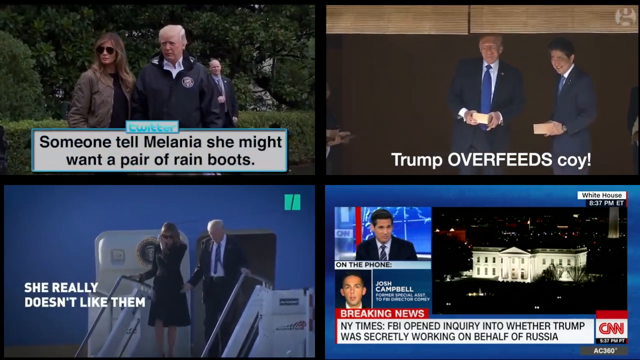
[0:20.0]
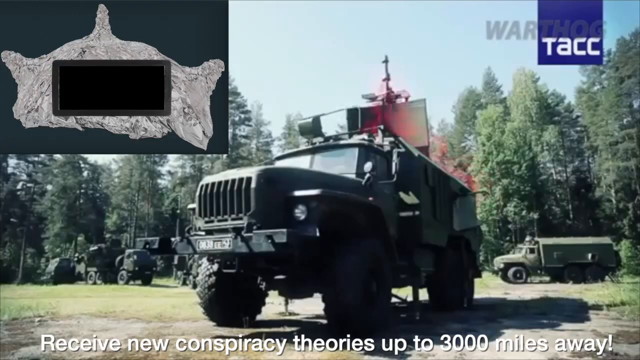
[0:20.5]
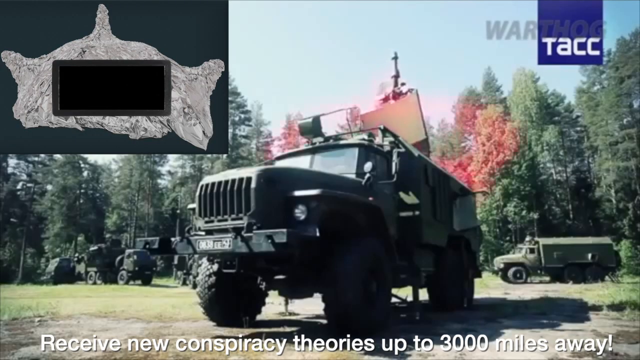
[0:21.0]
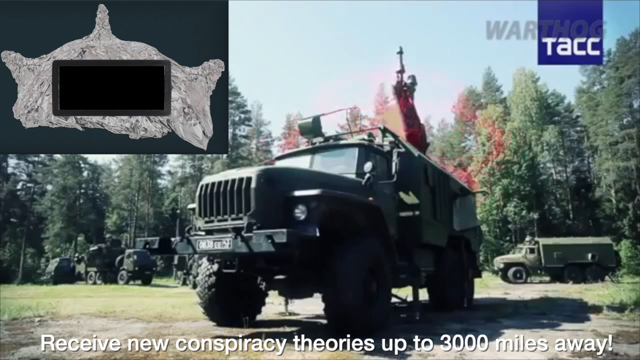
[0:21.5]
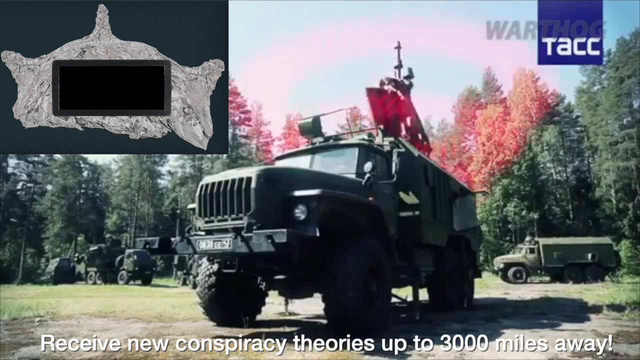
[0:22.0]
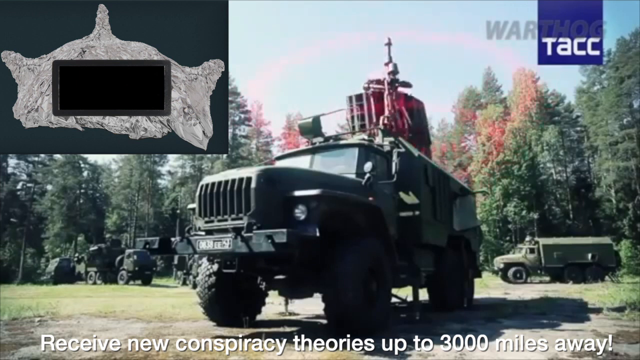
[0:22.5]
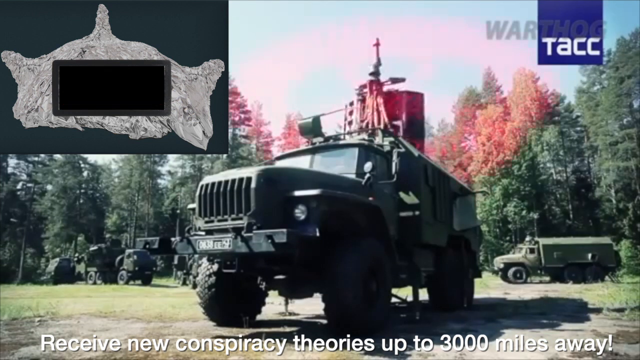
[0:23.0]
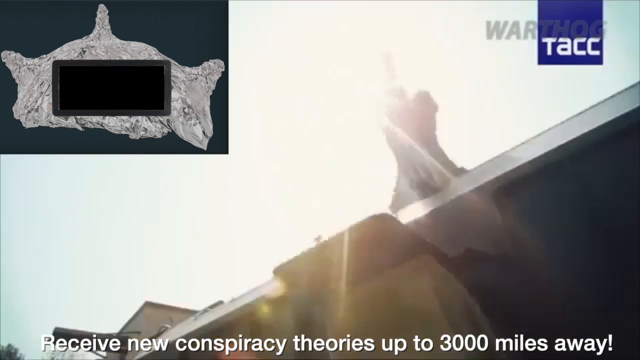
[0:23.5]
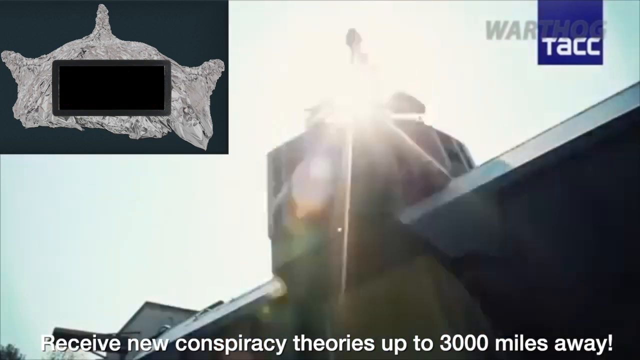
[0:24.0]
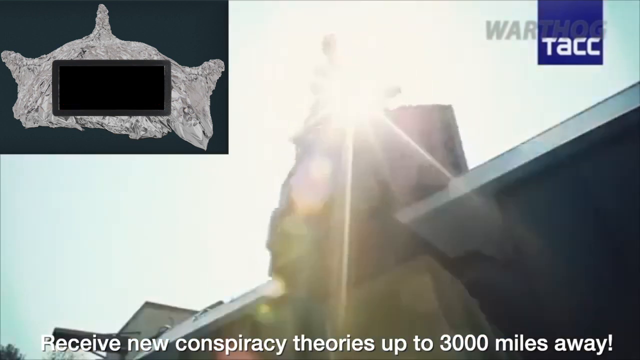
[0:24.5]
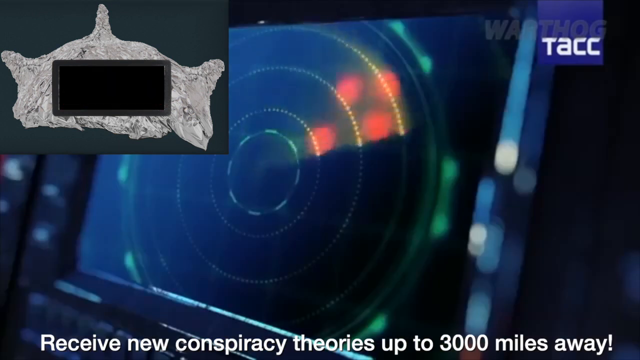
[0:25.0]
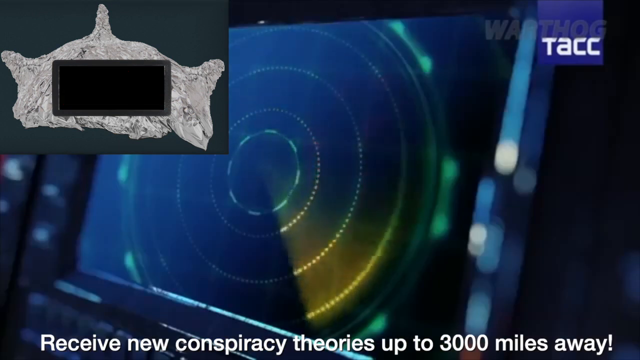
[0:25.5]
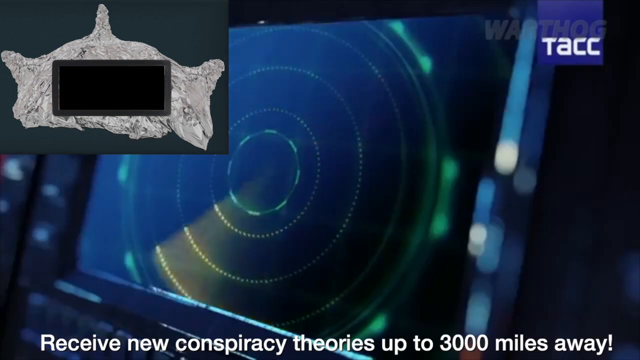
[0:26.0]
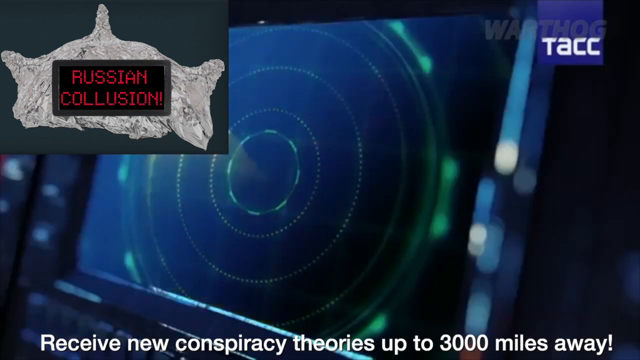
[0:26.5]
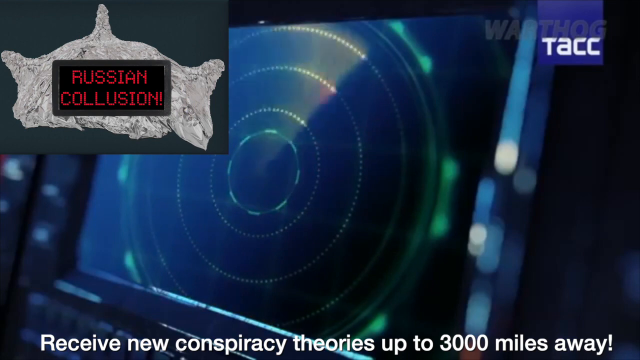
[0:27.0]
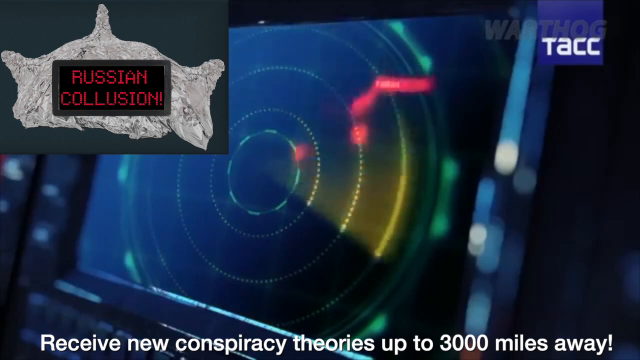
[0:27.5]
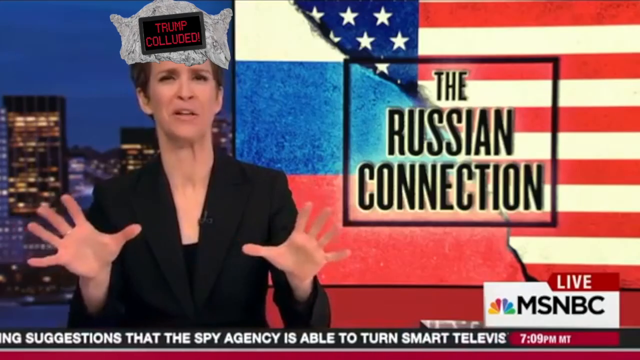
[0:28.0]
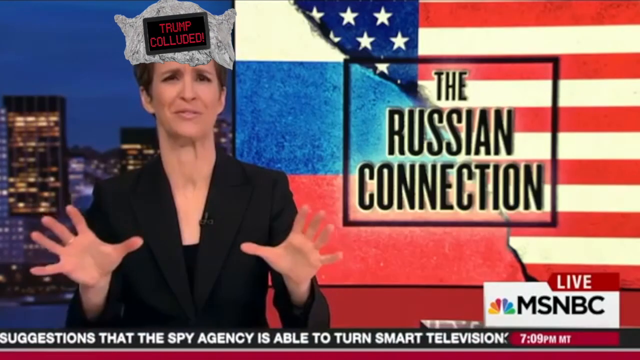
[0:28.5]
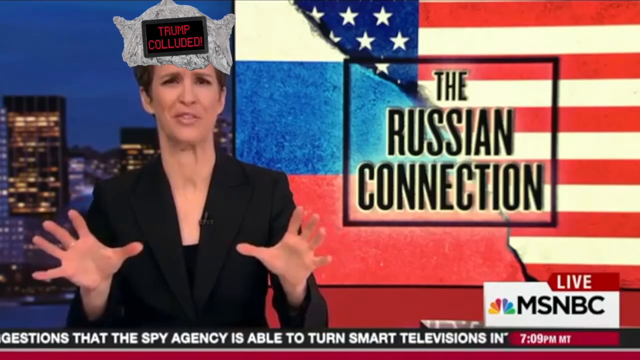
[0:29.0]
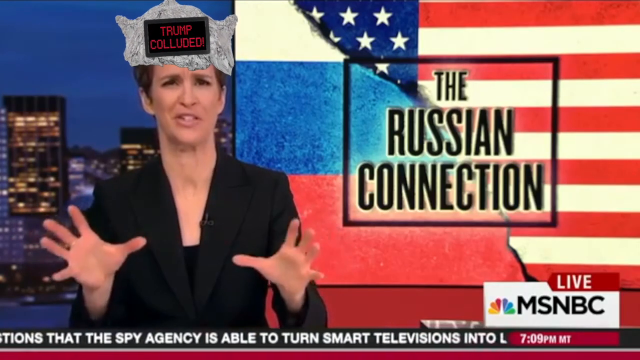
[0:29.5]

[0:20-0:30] Four videos appear on screen. The upper left shows Trump and Melania with a Secret Service agent in an outdoor picture with trees and bushes, and a text box has been added over the lower part of the video reading "Someone tell Melania she might want a pair of rain boots". On the right, Trump and a man with dark hair, both in navy suits, appear against a brown background, with text reading "Trump" followed by "OVER FEEDS" in capital letters and "coy!" in small letters. The lower left is a shot of President Trump and the first lady getting off Air Force One, and the lower right shows part of a news clip. The screen then changes to show a military truck in the middle and another military truck to the right. In the upper left is a tinfoil hat and a small picture with a blank sign, with "Russian collusion" flashing in it. The screen changes to a radar screen, and then to MSNBC, where a tinfoil hat has been put on Rachel Maddow, with "Trump collusion" on it.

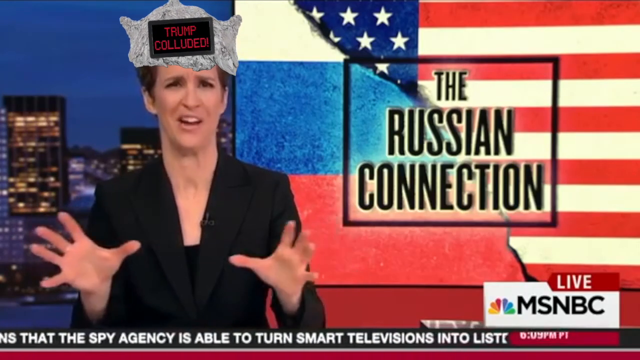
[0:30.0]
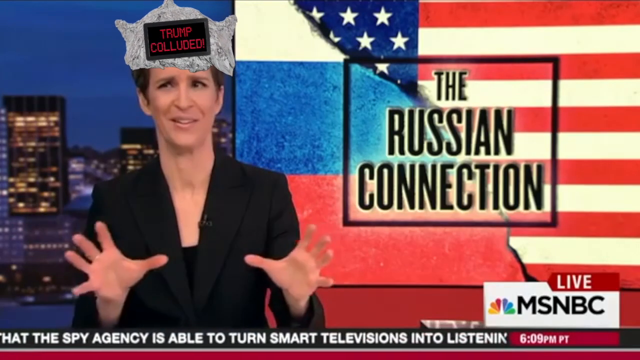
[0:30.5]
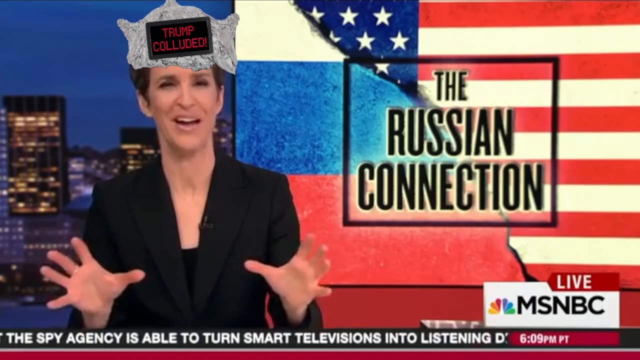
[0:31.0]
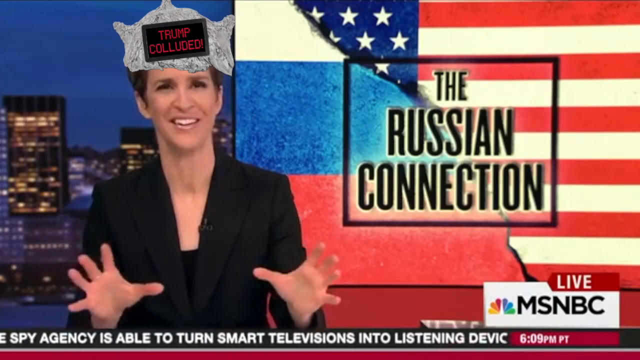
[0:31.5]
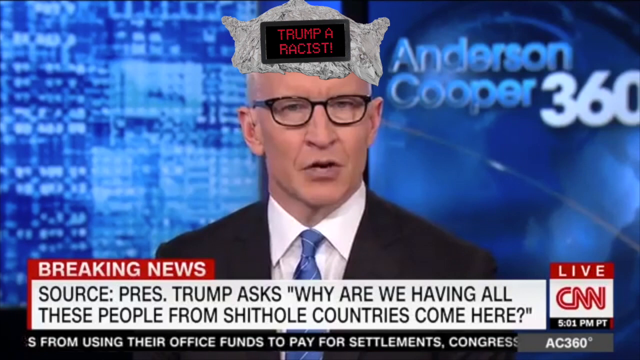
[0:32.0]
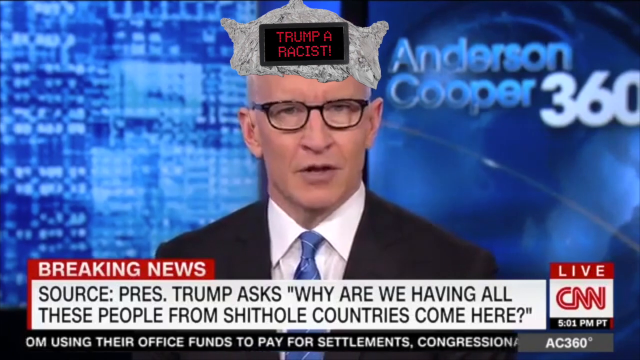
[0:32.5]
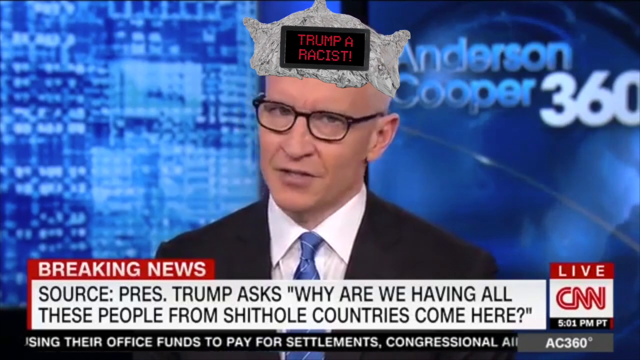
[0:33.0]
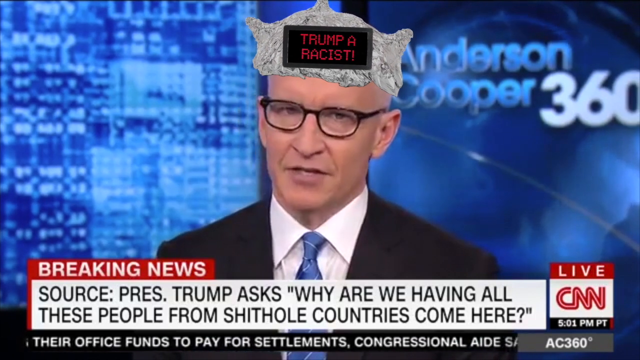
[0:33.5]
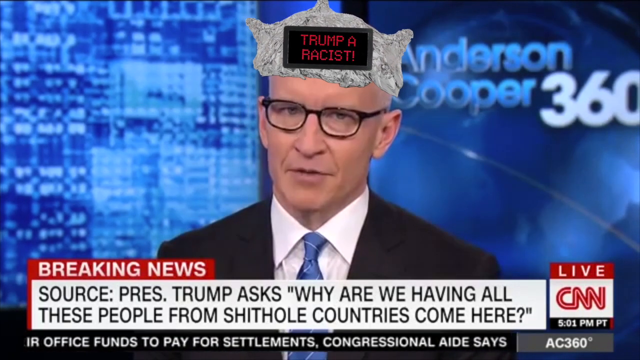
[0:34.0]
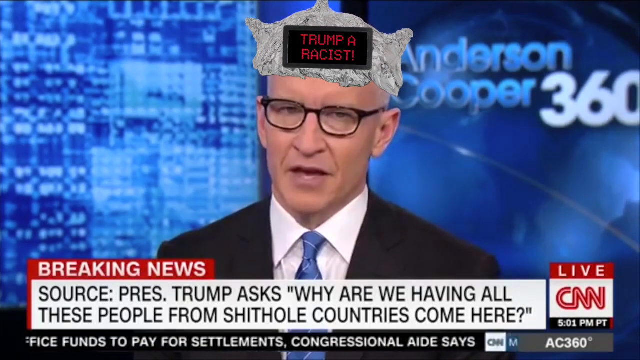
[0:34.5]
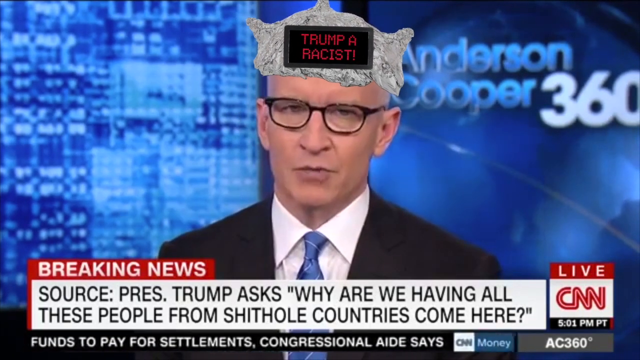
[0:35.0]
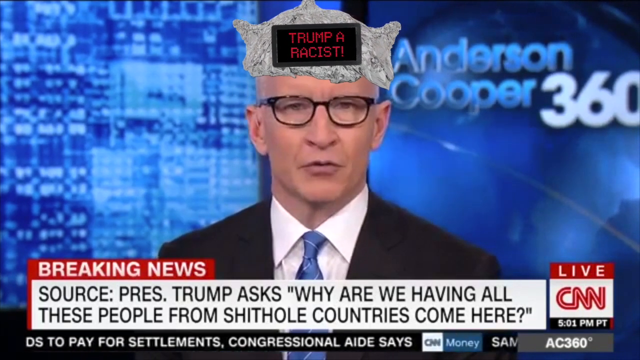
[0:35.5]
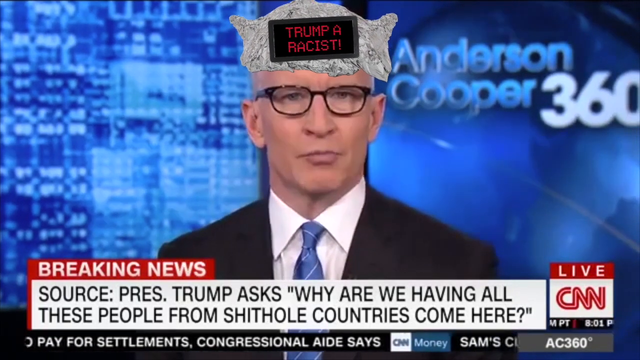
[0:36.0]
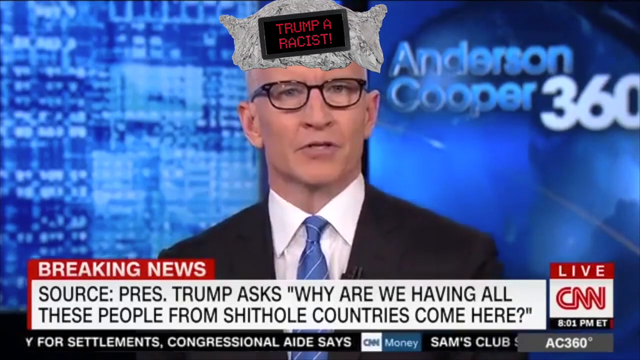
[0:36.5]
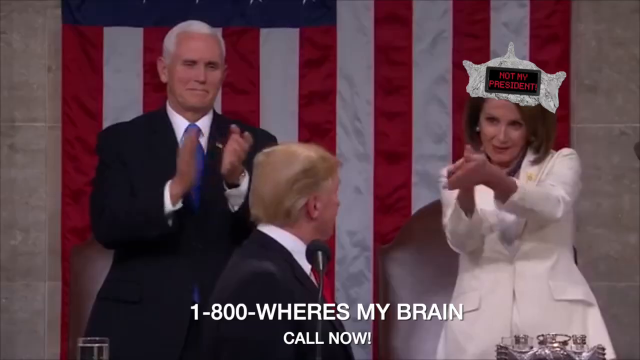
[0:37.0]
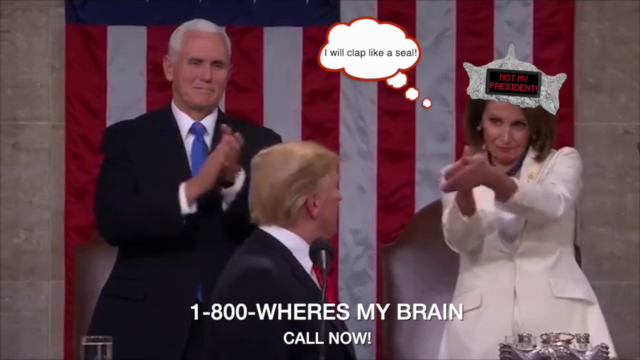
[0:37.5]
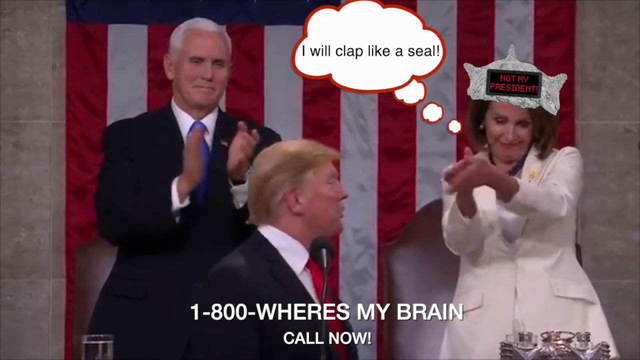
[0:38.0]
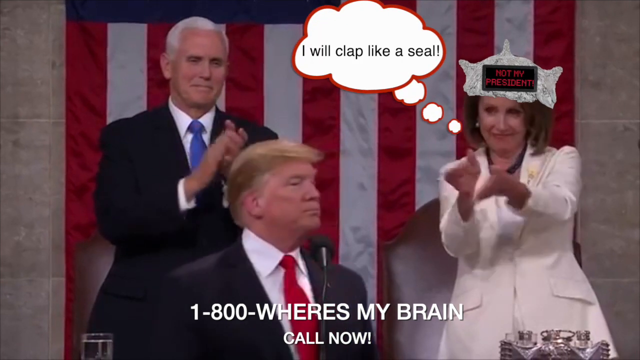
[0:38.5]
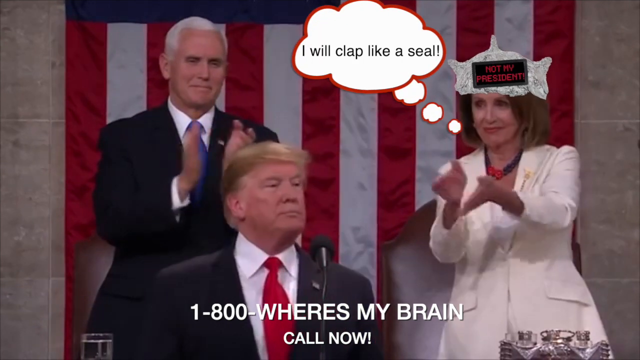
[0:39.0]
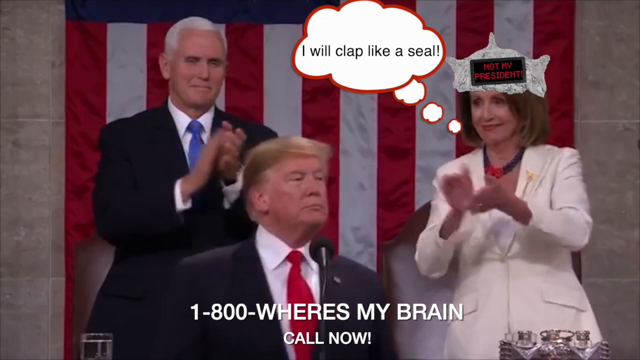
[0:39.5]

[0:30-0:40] Rachel Maddow is talking with her hands and making expressions, still wearing the superimposed tinfoil hat and "Trump collusion" sign on her forehead. "live" and MSNBC appear on the lower right. In a square on the screen, text reads "the Russian connection", and part of the Russian flag is shown, white on top, blue in the middle and red on the bottom, with the American flag to the left of it, which is to Rachel Maddow's right. A city scene is shown. Rachel smiles and moves her head back and forth. Next is newsman Anderson Cooper on "Anderson Cooper 360" on CNN, wearing a tinfoil hat with the sign "Trump racist". "breaking news" appears at the bottom of the screen, along with a line beginning "source: President Trump asked why are we having all" that includes a curse word. Anderson Cooper is talking; he wears glasses, a white shirt and a blue tie. The video then moves to another scene with a number at the bottom of the screen reading "1-800-where's my brain". The scene shows President Trump in front, Vice President Pence on his right, and Nancy Pelosi on the left.